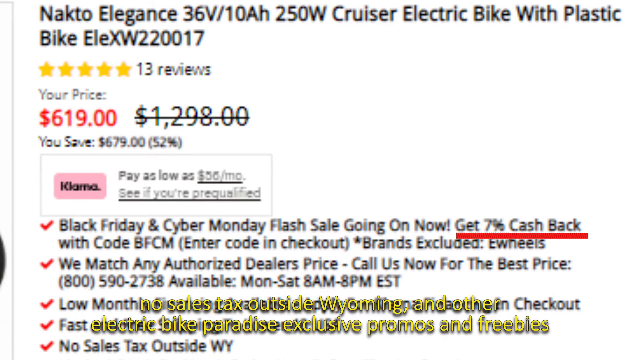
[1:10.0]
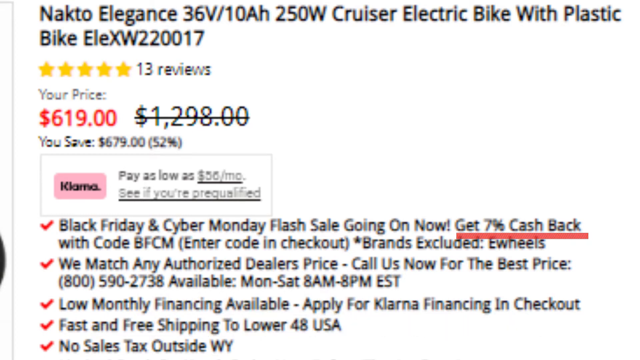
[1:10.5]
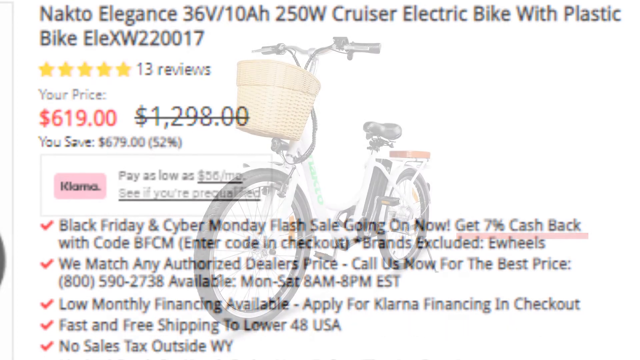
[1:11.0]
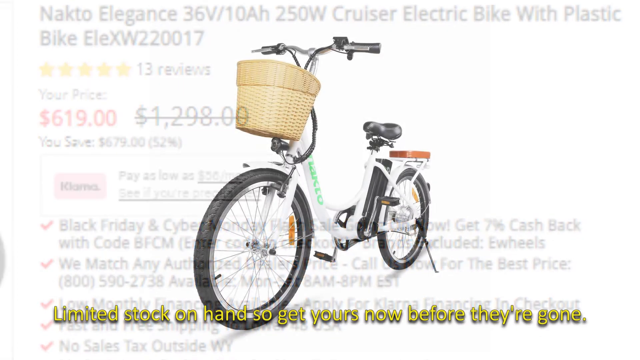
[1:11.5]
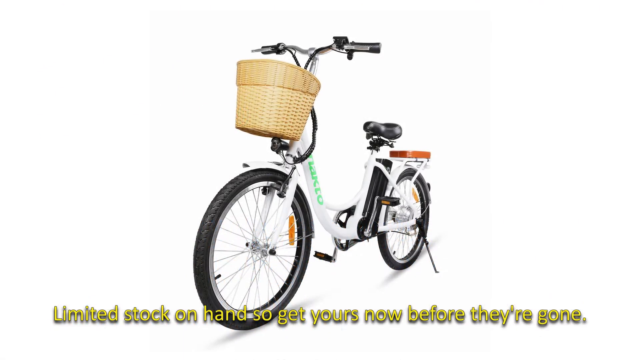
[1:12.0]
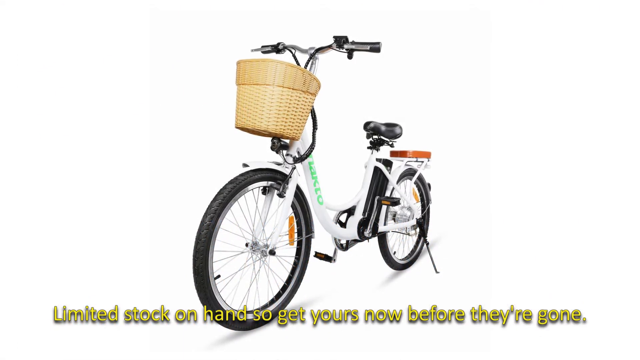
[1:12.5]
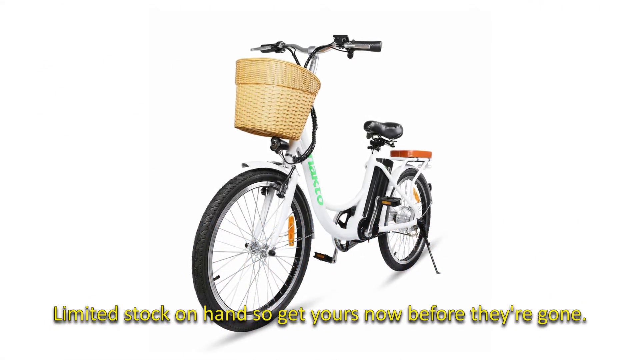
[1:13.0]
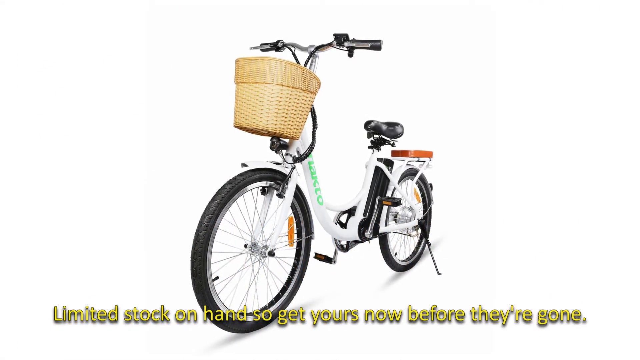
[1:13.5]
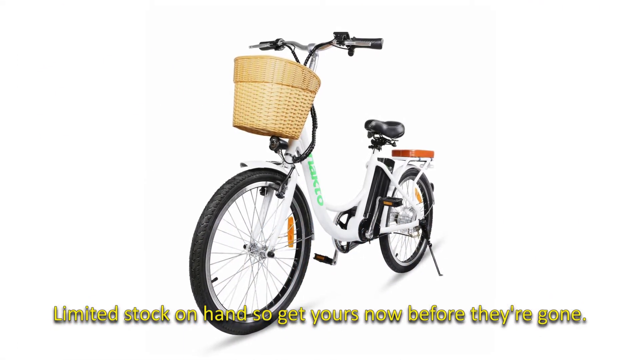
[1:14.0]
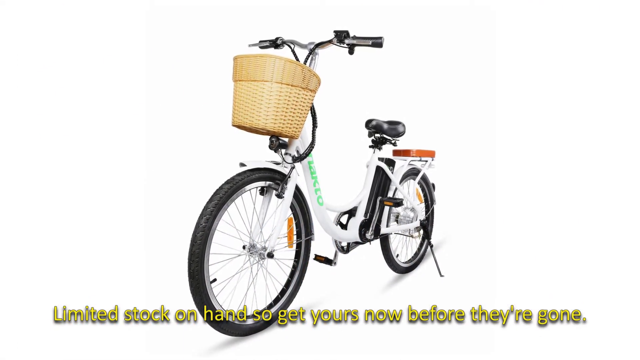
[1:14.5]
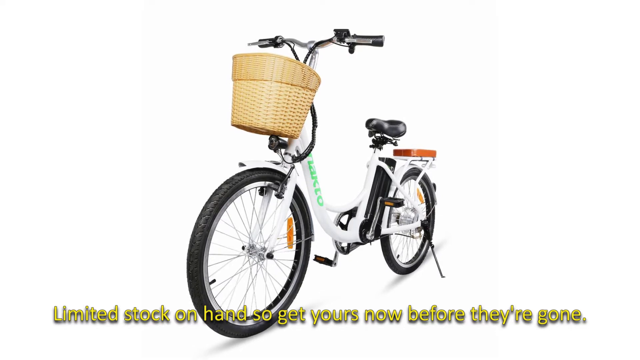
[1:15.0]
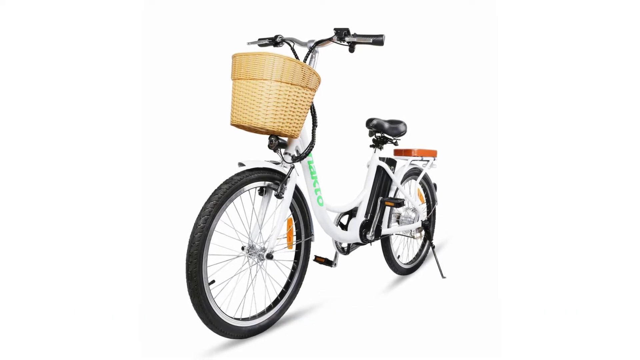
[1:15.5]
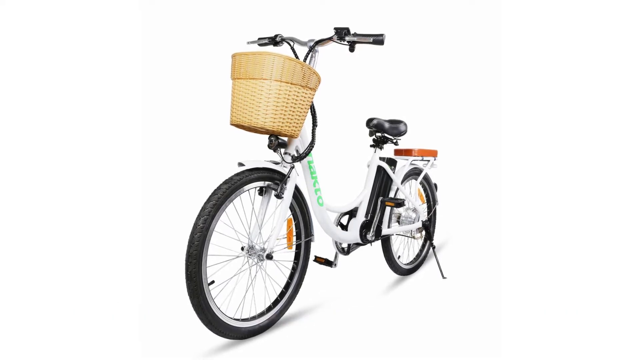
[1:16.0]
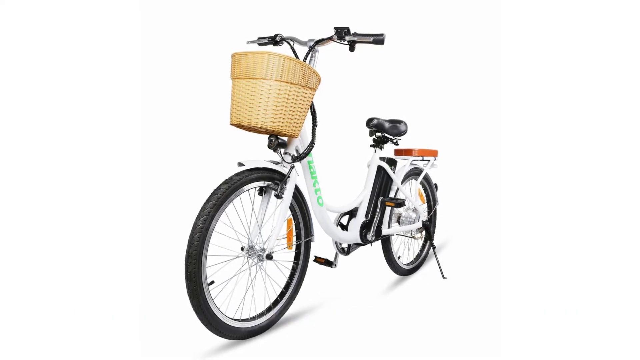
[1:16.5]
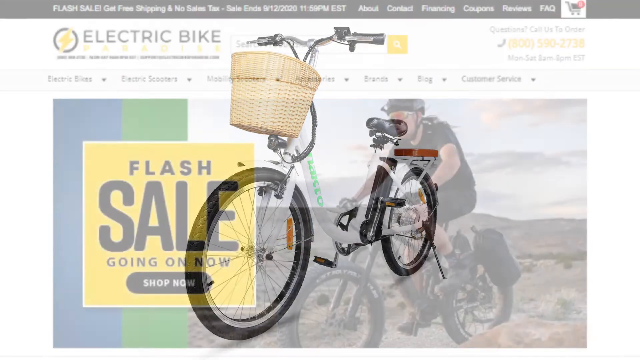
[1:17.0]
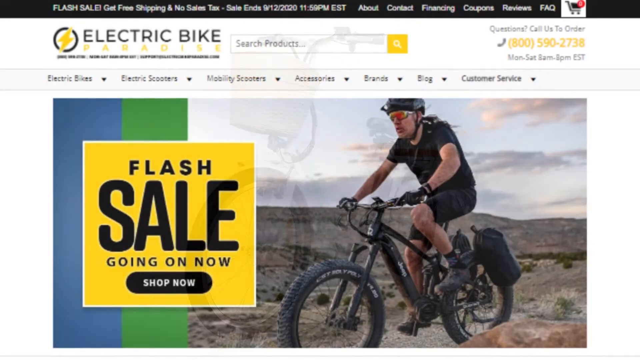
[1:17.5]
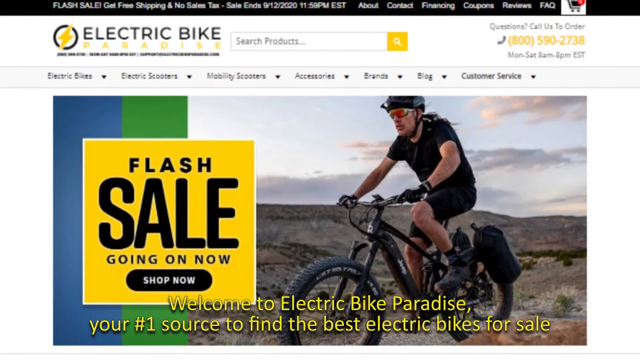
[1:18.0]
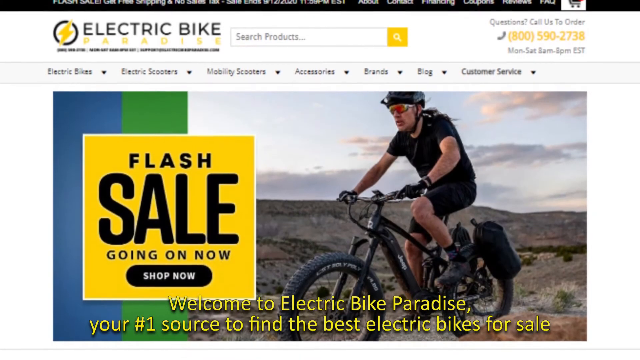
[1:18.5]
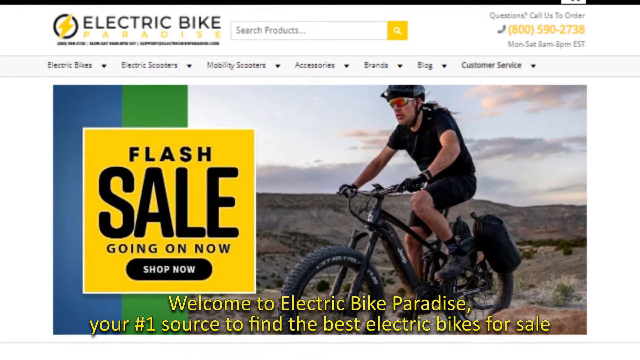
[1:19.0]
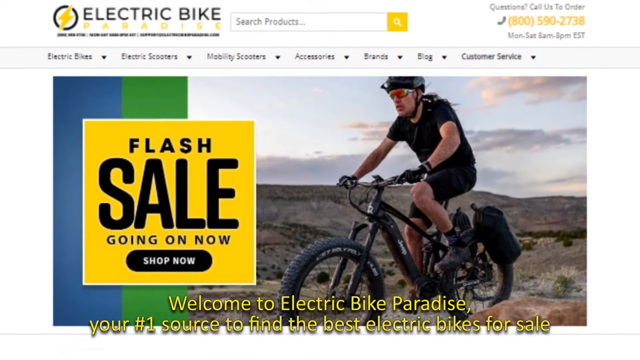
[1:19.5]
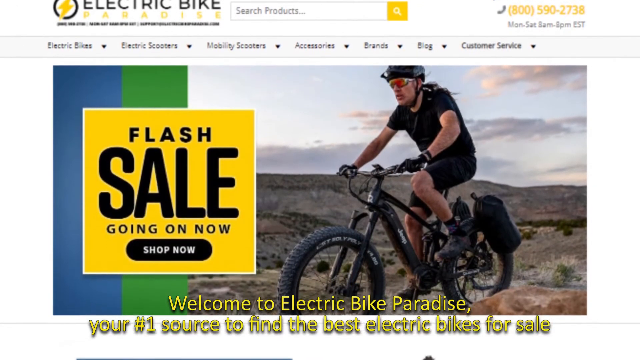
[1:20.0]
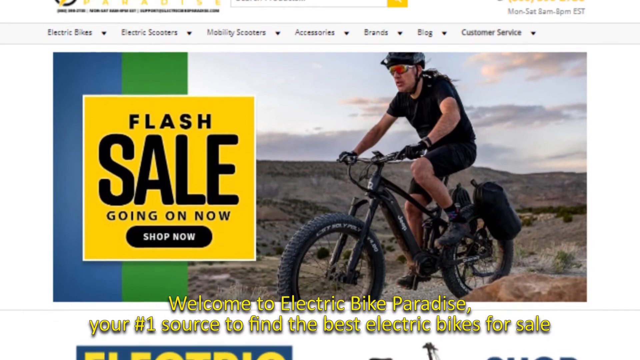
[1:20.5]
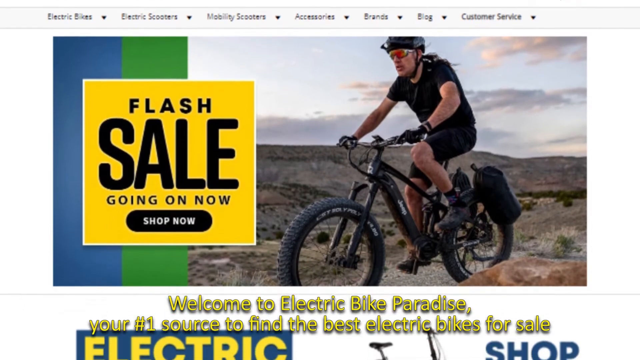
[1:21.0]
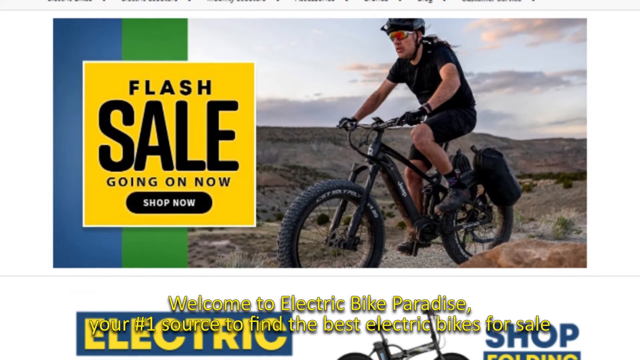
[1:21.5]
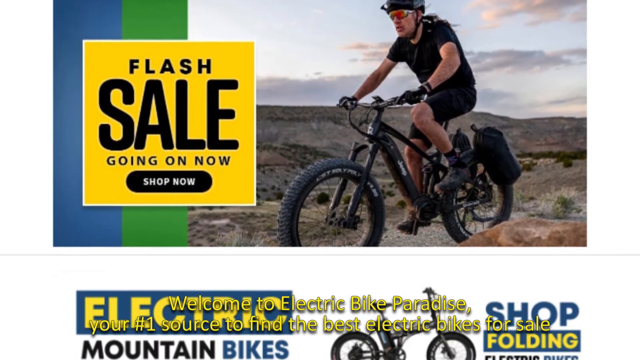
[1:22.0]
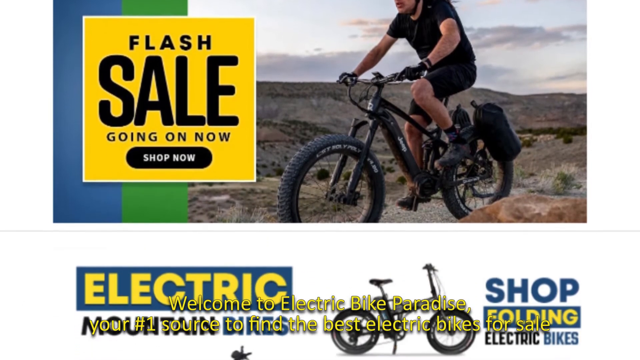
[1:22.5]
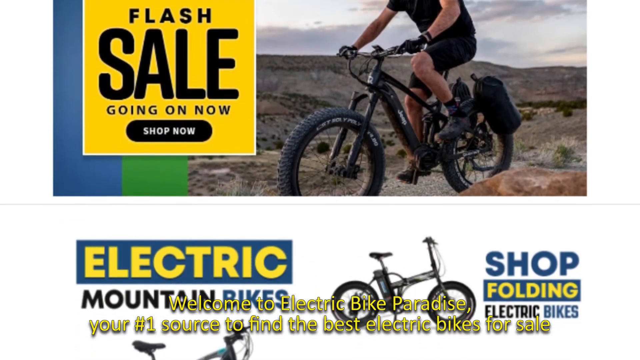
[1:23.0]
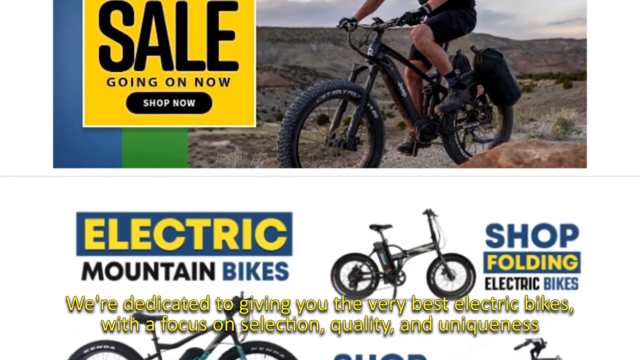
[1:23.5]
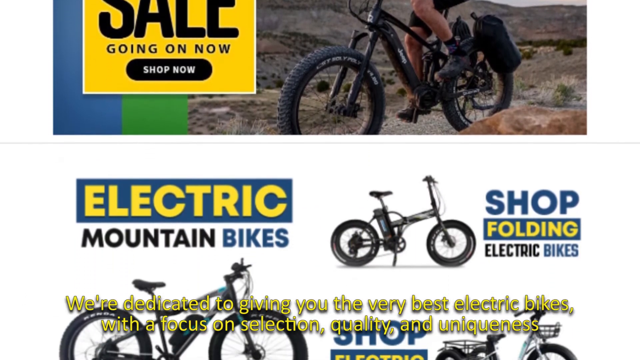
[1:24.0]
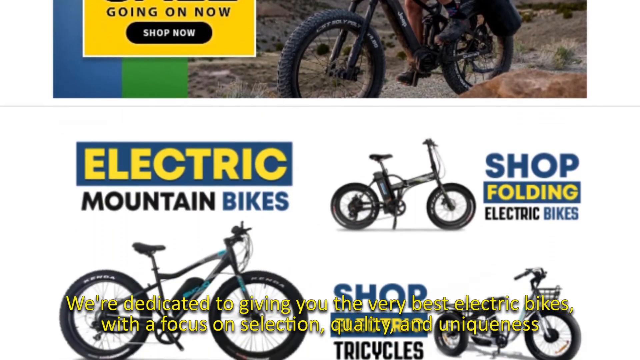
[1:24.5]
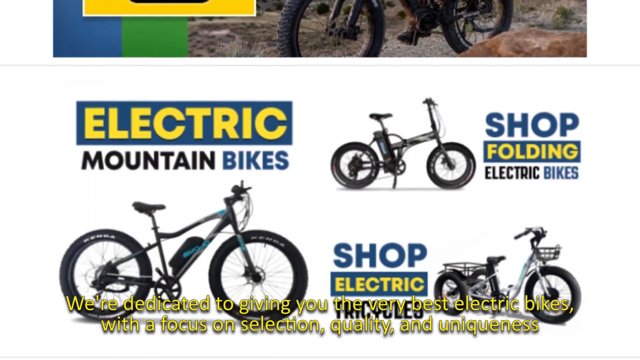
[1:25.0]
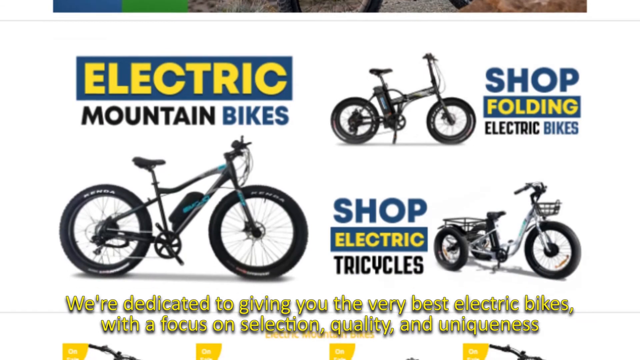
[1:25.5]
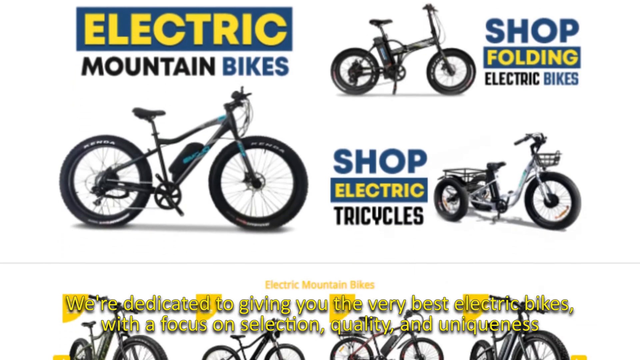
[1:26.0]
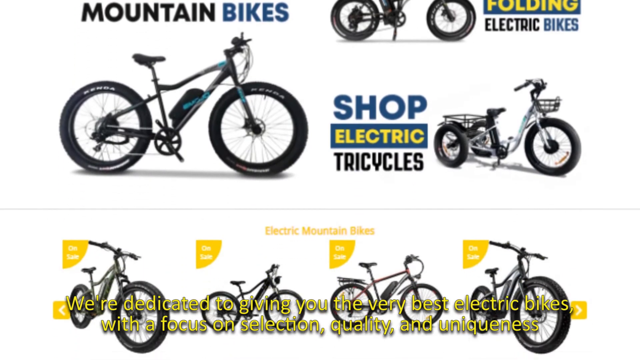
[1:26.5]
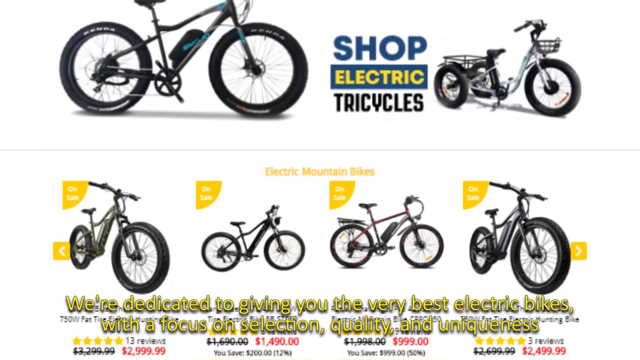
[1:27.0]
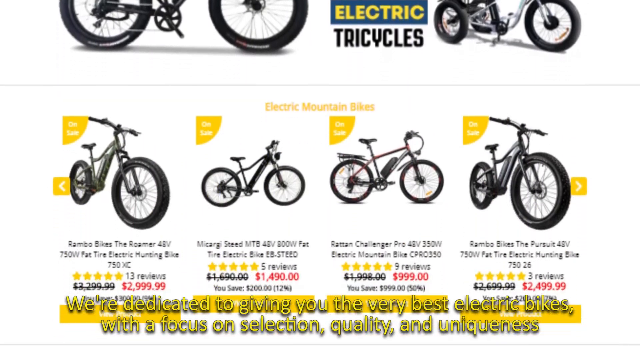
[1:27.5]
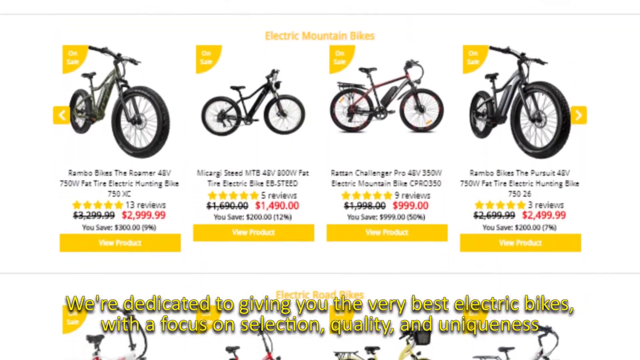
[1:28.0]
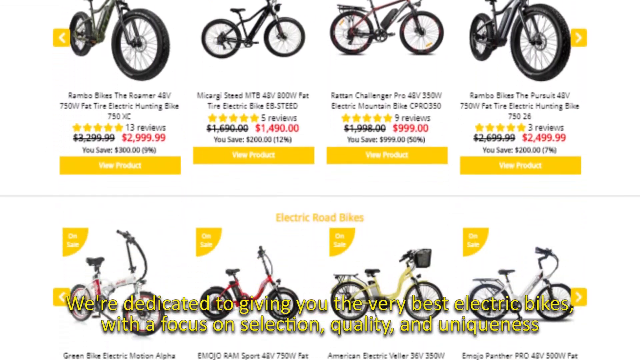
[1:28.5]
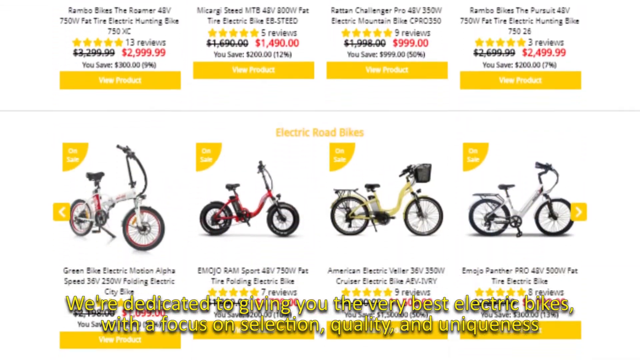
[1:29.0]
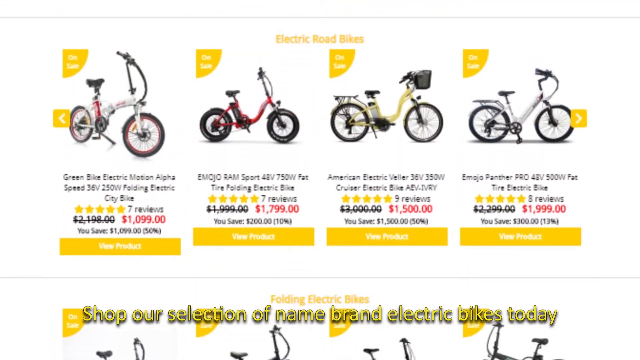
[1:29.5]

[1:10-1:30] The full bike is shown on a white background, with a basket in front, a black main seat, a black passenger seat at the back, a stand and pedals. Text notes limited stock on hand and advises getting one before it's gone. The website of the bike's marketers, Electric Bike Paradise, is then visited. Its menu has a product search and options for electric e-bikes, electric scooters, mobility scooters, accessories, brands, blog and customer service. In the top right corner, a section for questions shows the number to call to order, 800-590-2738, written in yellow, with the hours of operation, Monday to Saturday 8am to 8pm EST, underneath. An image shows a man dressed all in black, wearing gloves, sunshades and a helmet, riding a bike with very big tires; he seems to be on a mountain under a light blue sky. The page also says "flash sales going on now" with "shop now", the flash sales letters in black on a yellow background. Further down are sections for electric mountain bikes with pictures of such bikes, folding electric bikes with an image of one, and electric tricycles. The electric mountain bikes section lists bikes on sale with specifications, reviews and prices in red: a Rambo bike for $2,999.99, on sale with $300 savings, and others for $1,490.99, $999.99 and $2,499.99.